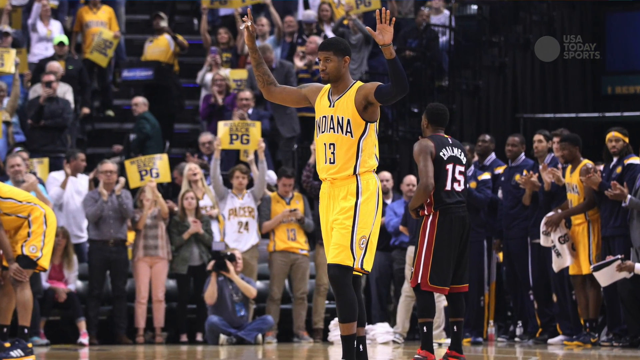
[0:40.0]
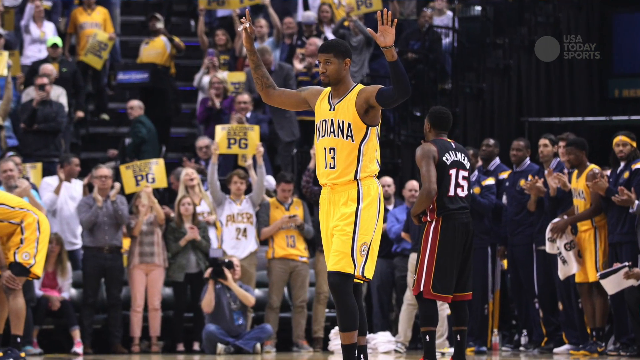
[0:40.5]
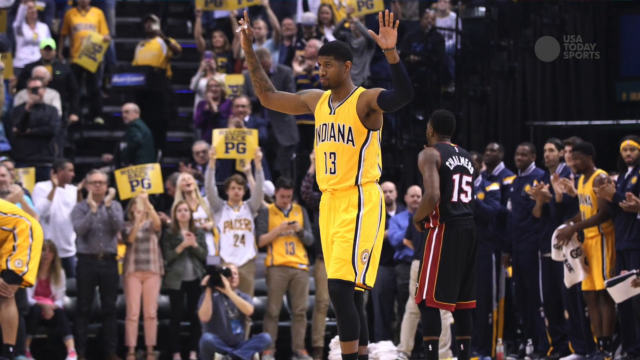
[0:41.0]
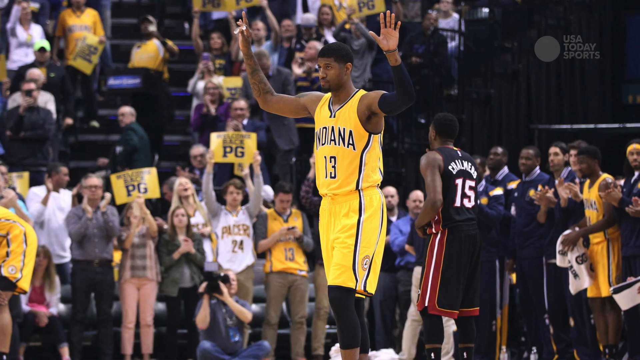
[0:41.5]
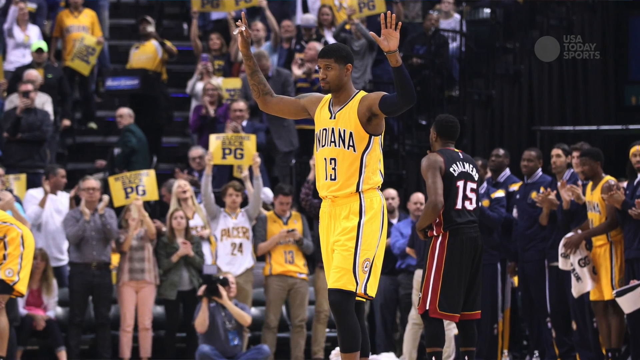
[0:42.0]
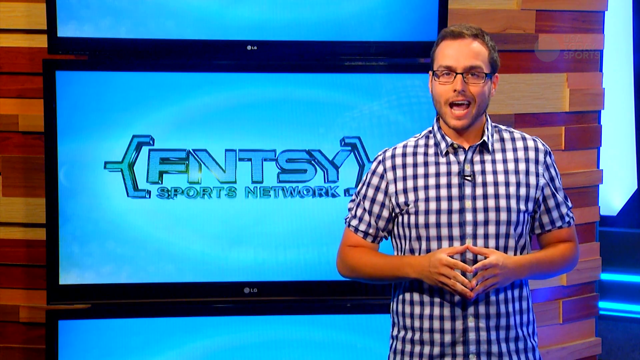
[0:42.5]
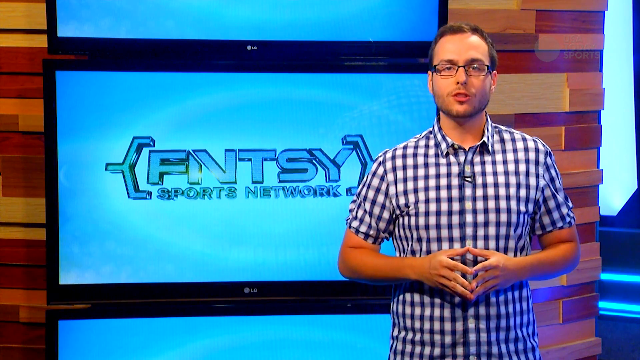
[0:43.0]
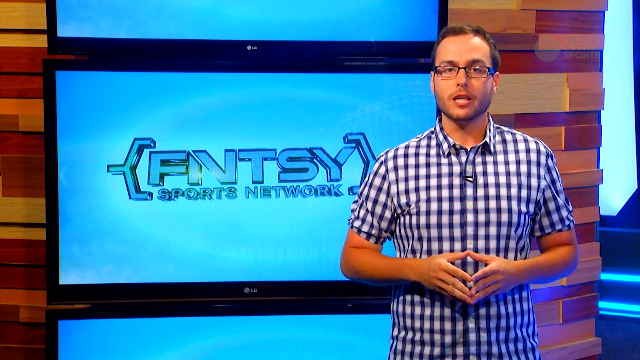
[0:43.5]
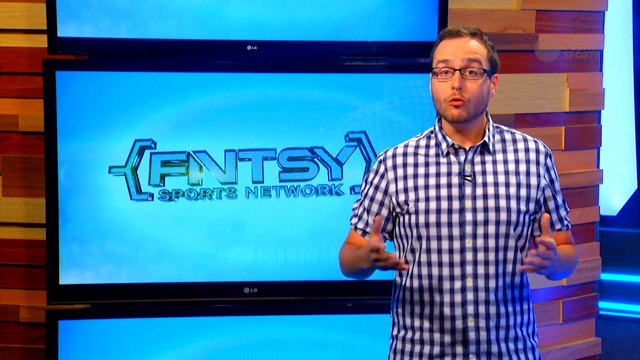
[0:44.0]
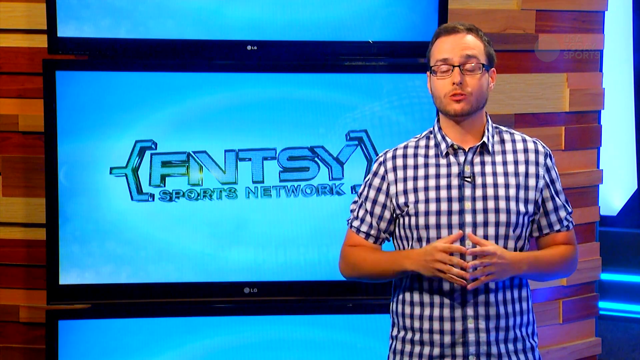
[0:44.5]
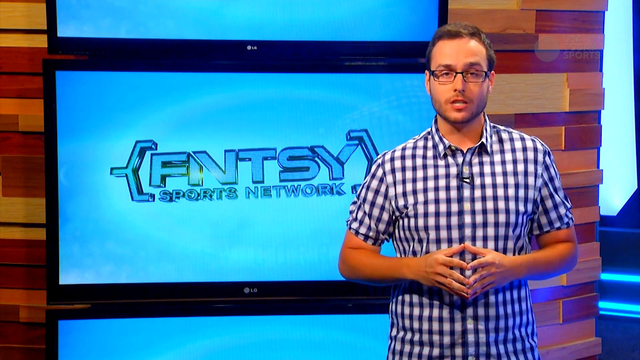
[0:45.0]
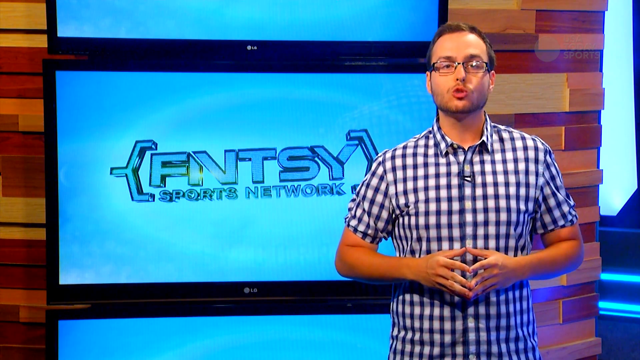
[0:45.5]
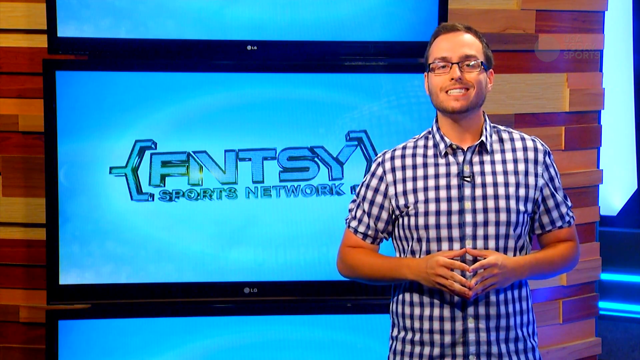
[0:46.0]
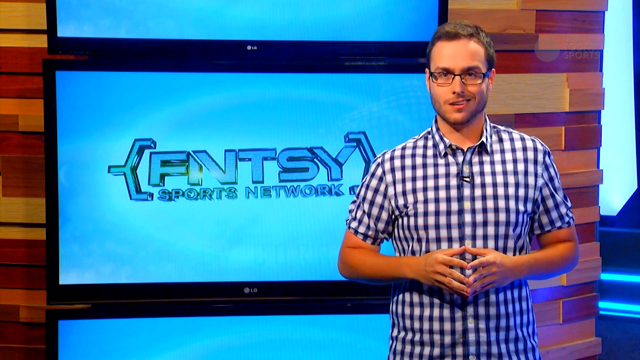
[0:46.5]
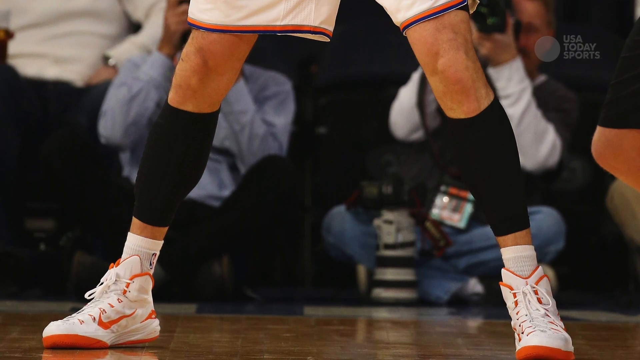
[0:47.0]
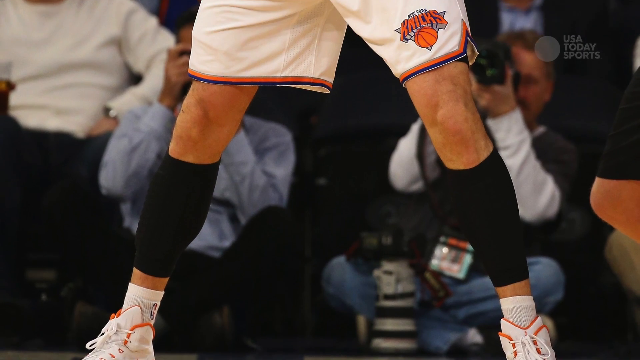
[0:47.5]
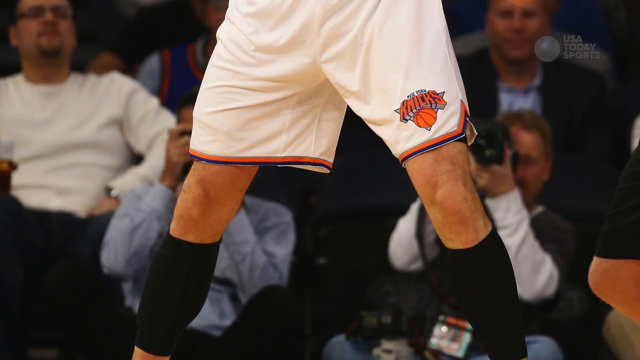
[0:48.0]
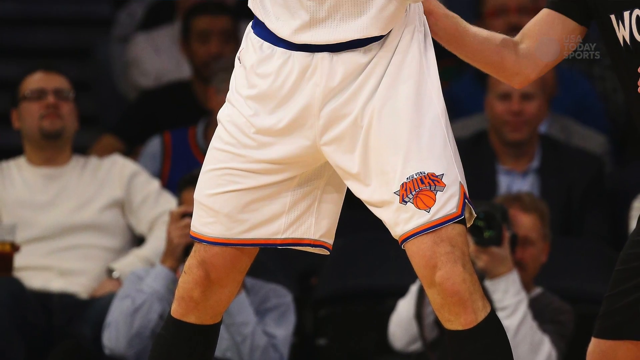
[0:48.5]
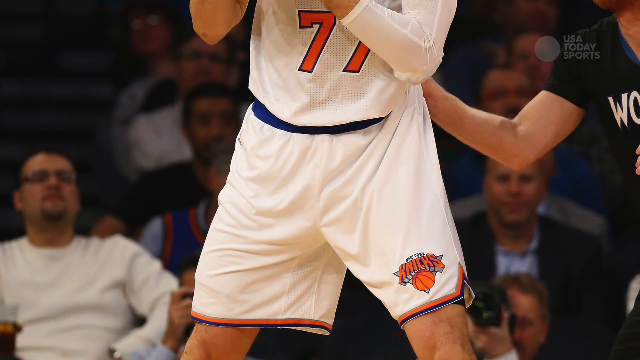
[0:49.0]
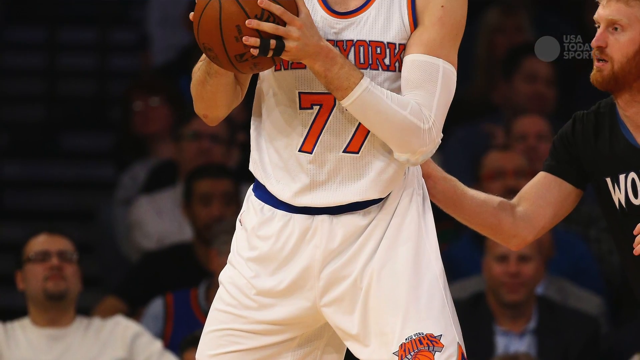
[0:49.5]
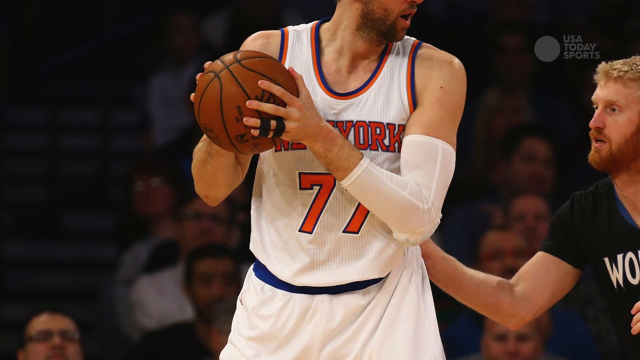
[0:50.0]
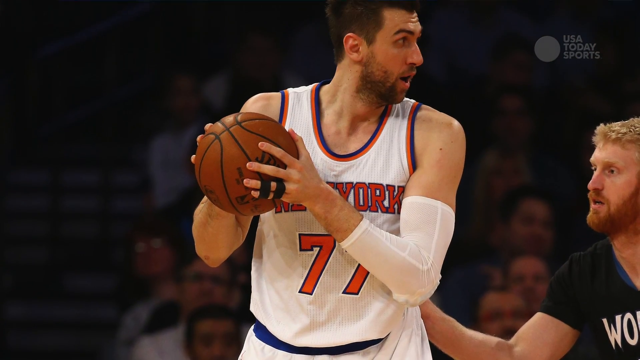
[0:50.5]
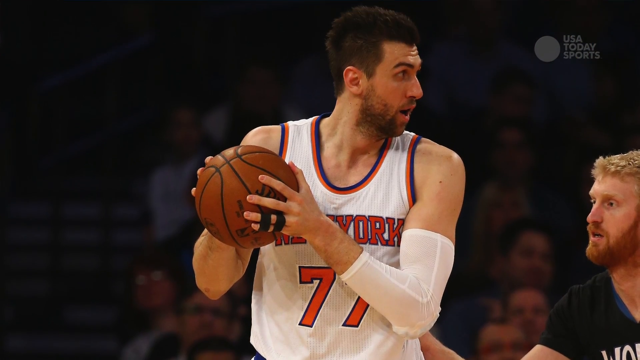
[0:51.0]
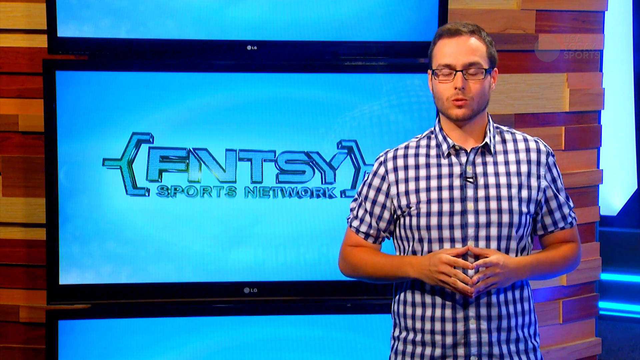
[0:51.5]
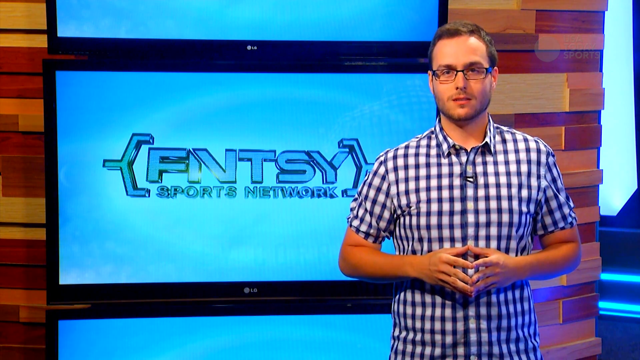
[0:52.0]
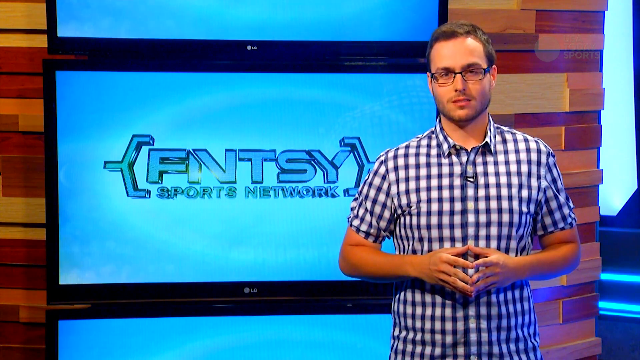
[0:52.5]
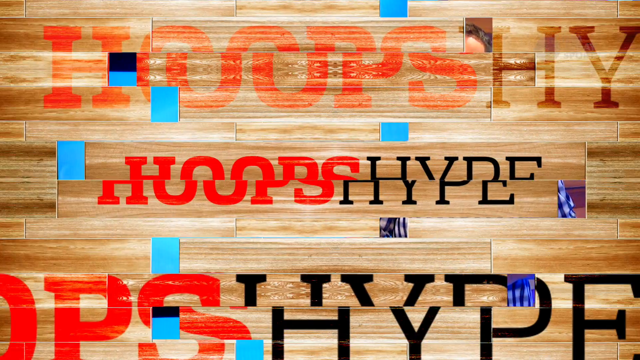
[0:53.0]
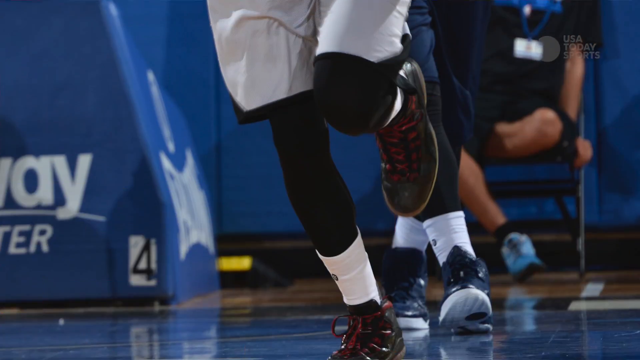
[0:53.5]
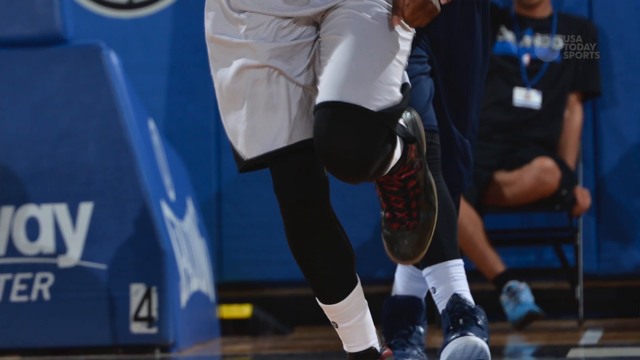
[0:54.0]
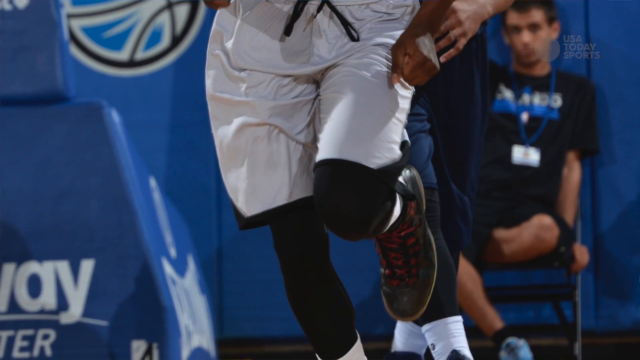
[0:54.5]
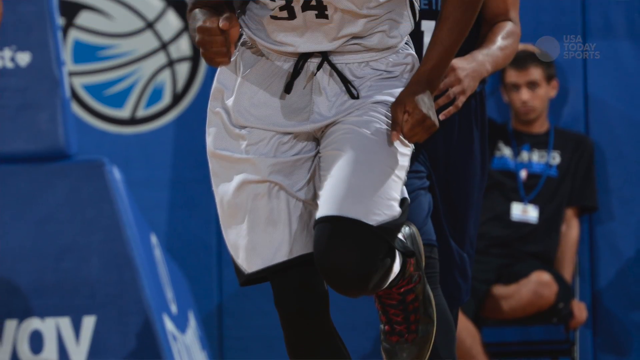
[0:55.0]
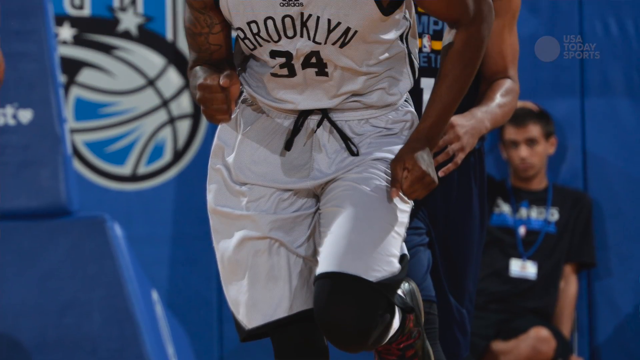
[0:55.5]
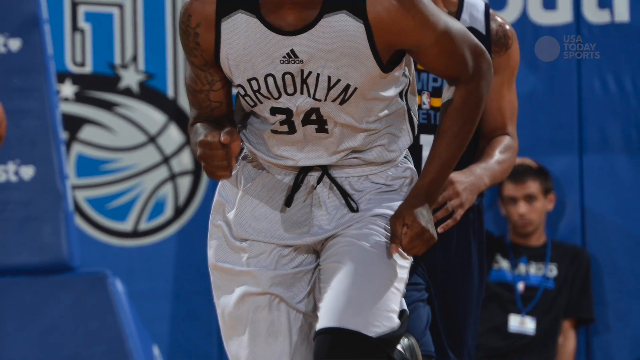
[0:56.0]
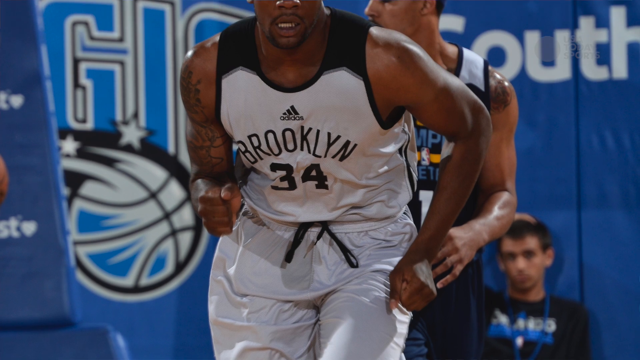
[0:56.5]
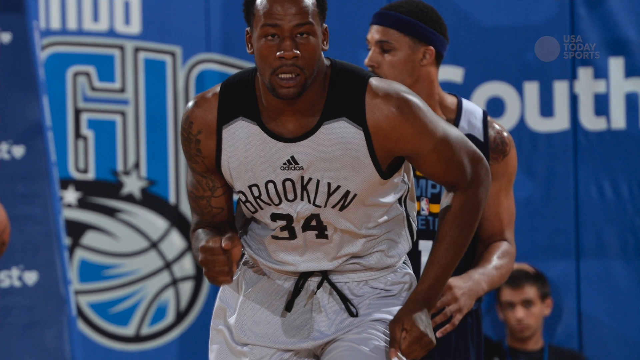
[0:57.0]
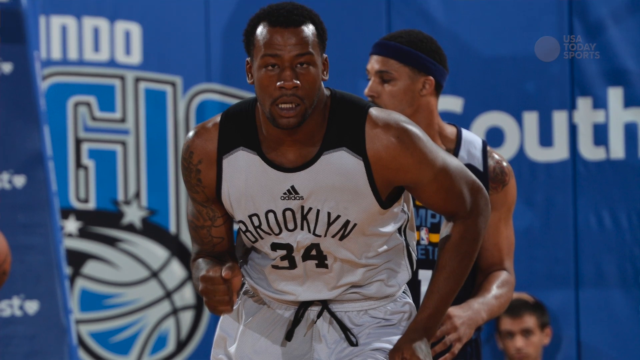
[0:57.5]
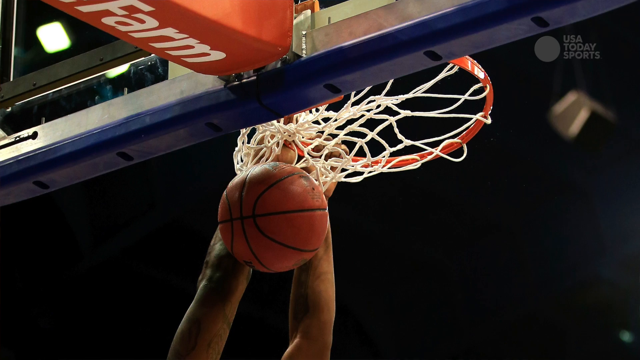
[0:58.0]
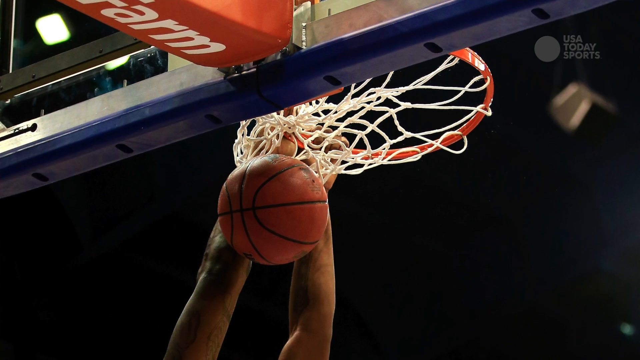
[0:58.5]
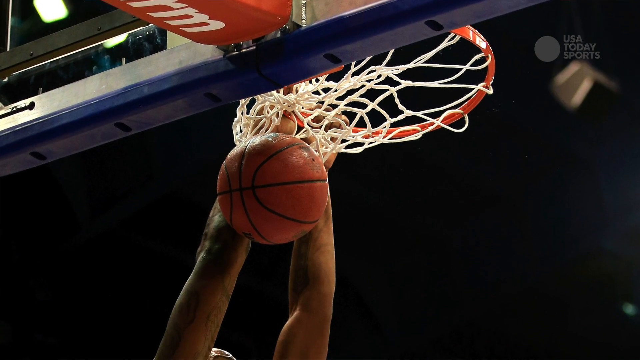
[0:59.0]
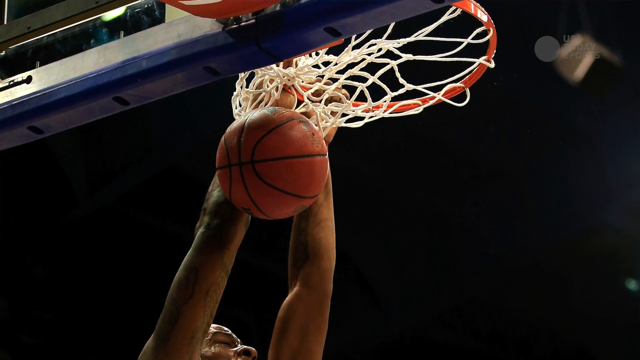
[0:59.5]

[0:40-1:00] Indiana is at a game, and one player is highlighted, standing in the middle of the court; it looks like he may have gone up for a shot. On-screen text says "fantasy sports" in abbreviated form. A sportscaster stands in front of a blue sign, wearing a tight-fitting plaid shirt with a microphone clipped to the front. He holds his fingers together, thumb to thumb and finger to finger, then spreads his fingers out, with his elbows at his sides, and kind of smiles and opens his mouth. A team in white jerseys plays, and a player with the ball looks to throw it to a teammate. A ball goes through the net; the player who made the basket may be from Indiana. The crowd cheers and holds up signs, and a big Indiana player, number 13, holds his hands up in the air.